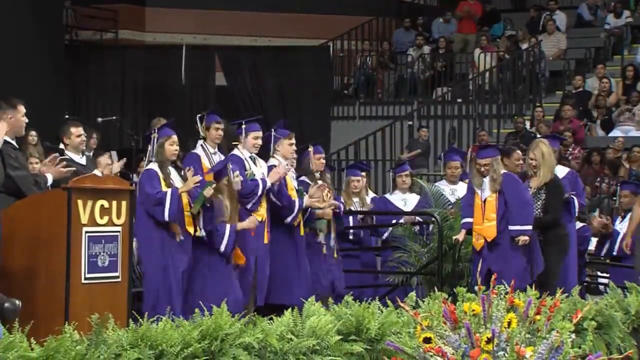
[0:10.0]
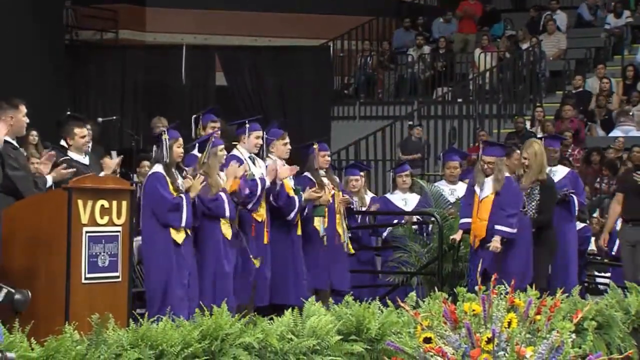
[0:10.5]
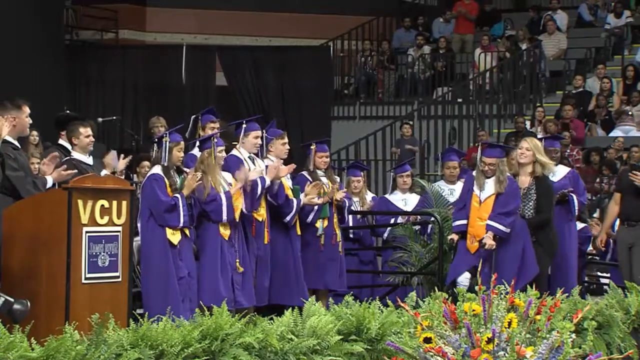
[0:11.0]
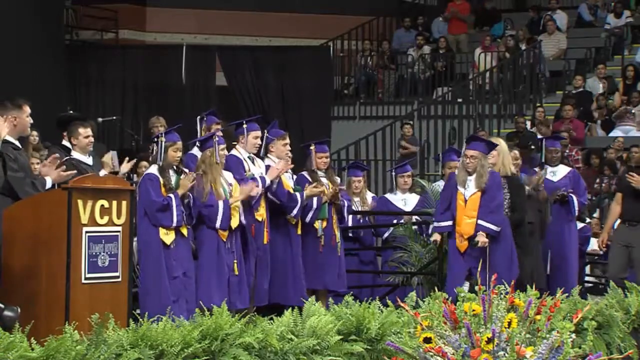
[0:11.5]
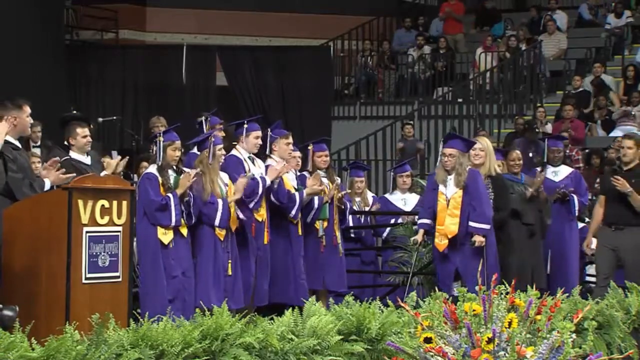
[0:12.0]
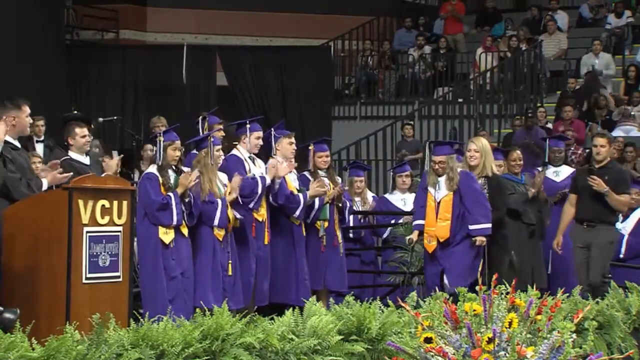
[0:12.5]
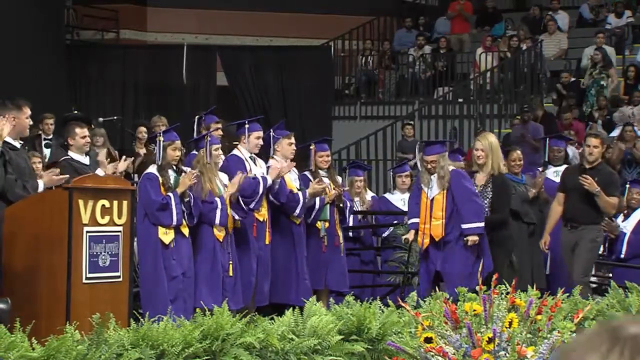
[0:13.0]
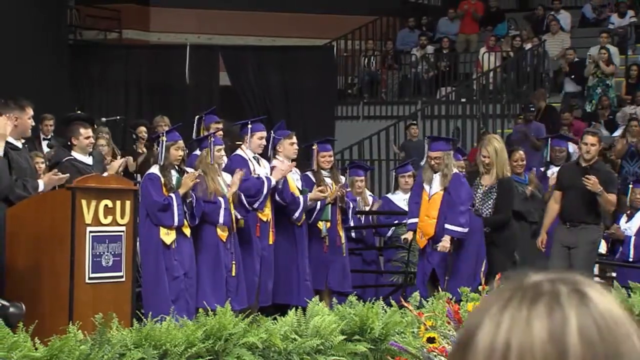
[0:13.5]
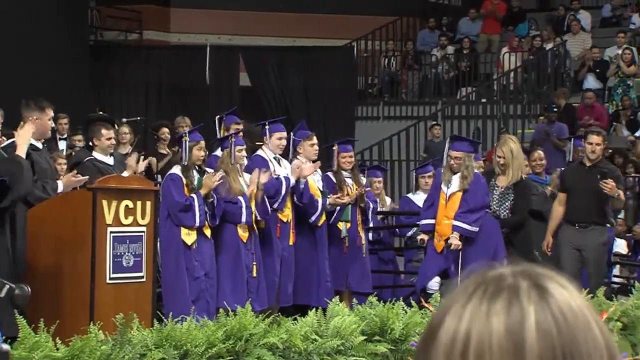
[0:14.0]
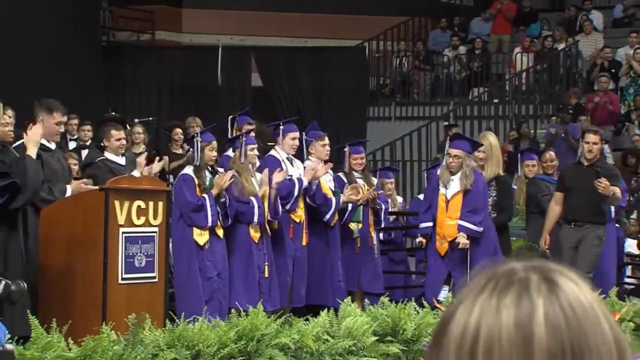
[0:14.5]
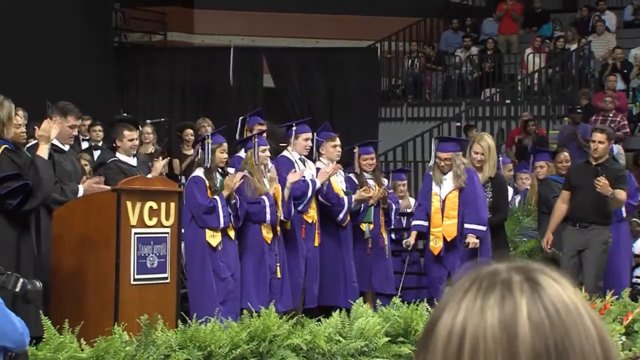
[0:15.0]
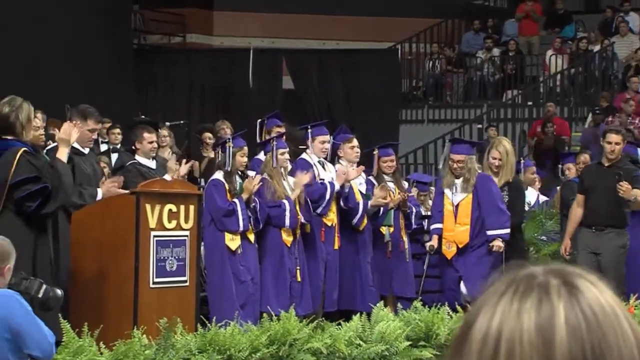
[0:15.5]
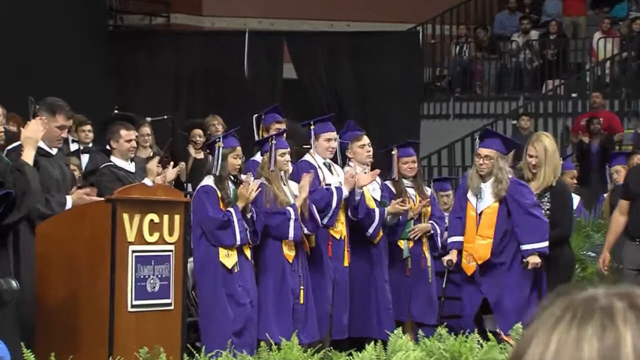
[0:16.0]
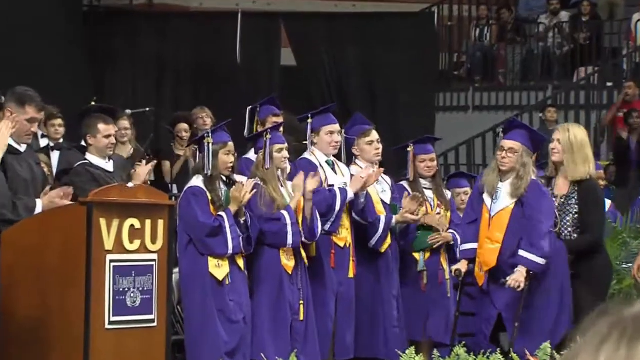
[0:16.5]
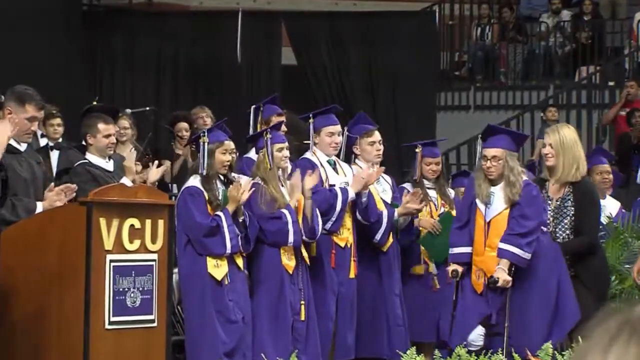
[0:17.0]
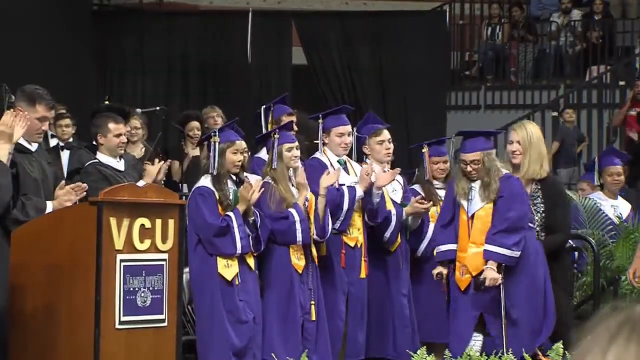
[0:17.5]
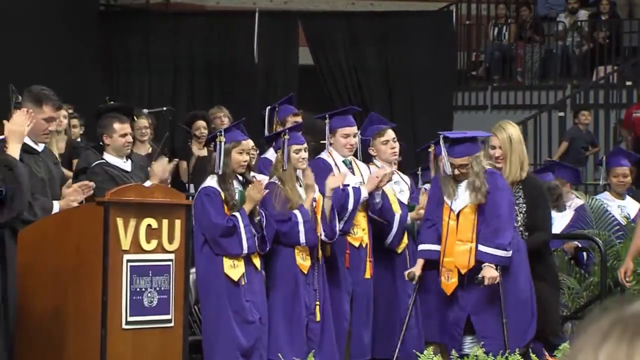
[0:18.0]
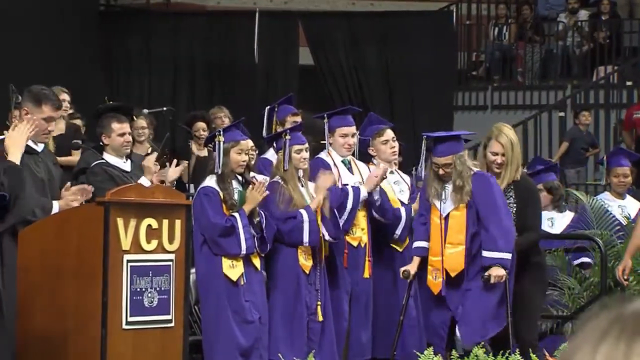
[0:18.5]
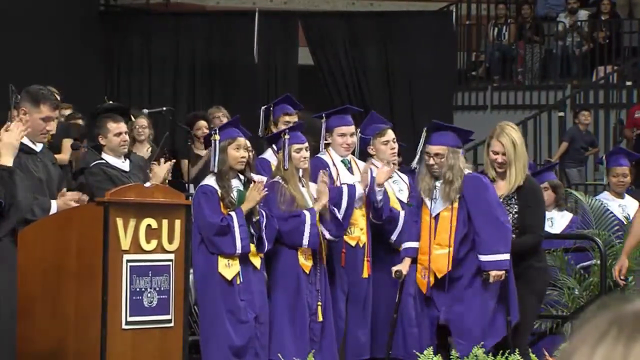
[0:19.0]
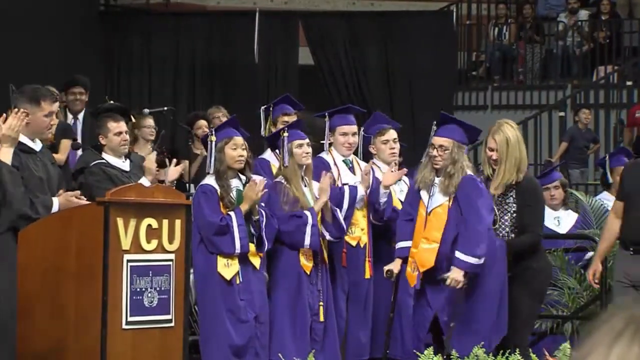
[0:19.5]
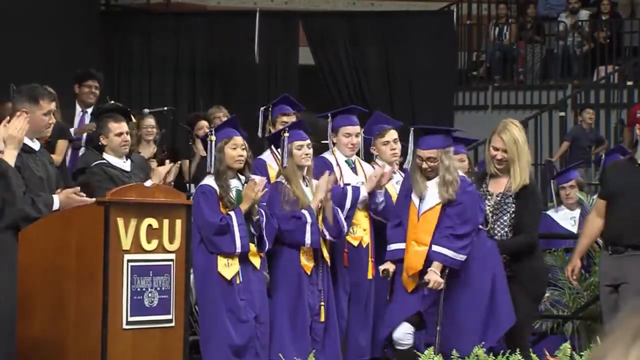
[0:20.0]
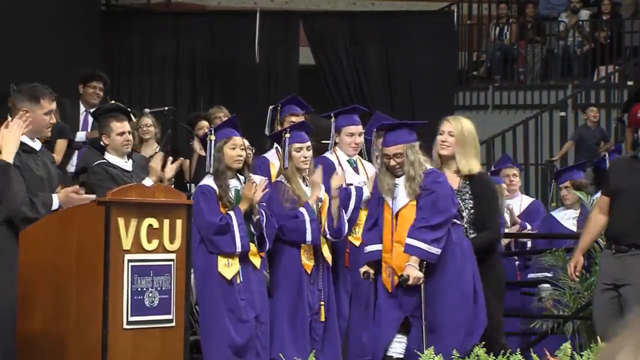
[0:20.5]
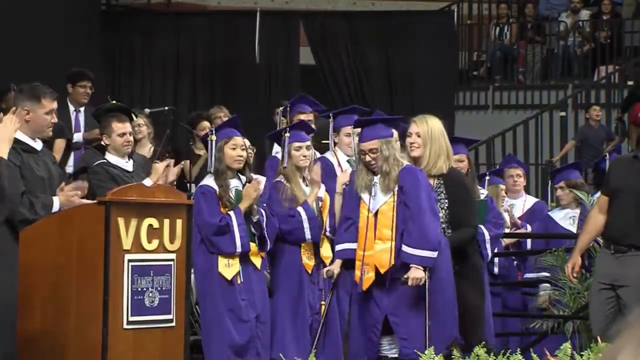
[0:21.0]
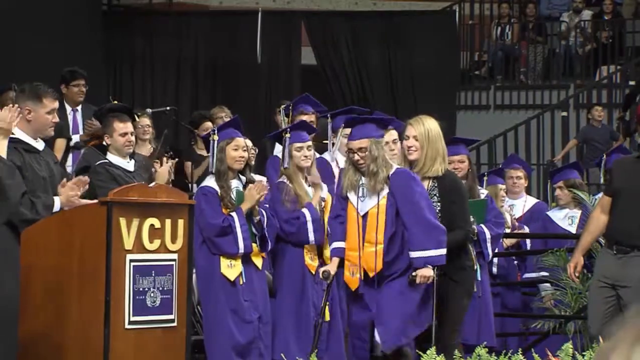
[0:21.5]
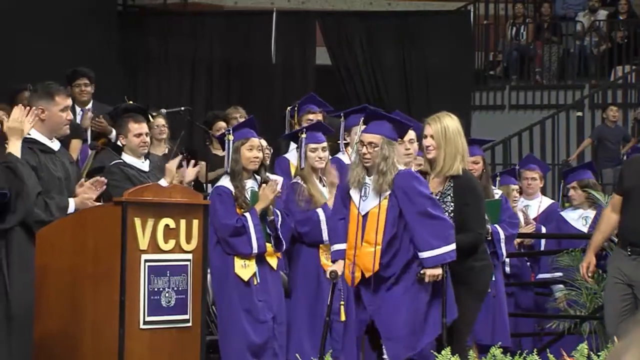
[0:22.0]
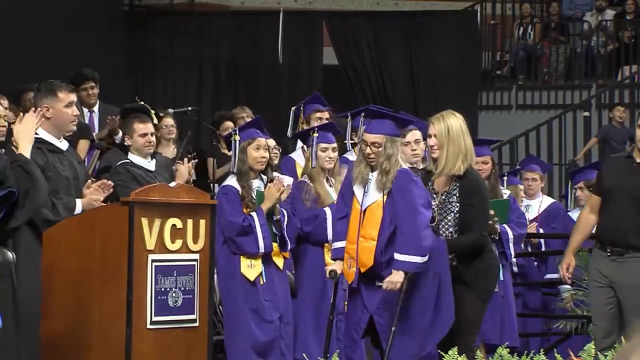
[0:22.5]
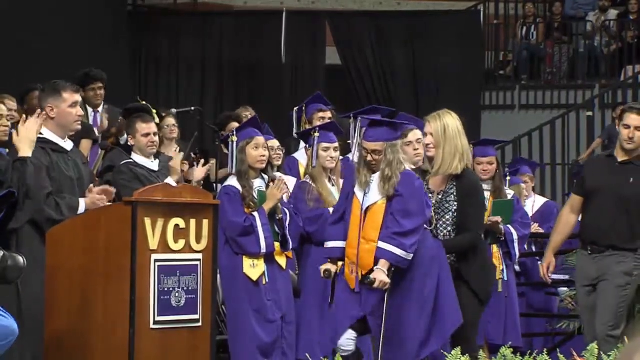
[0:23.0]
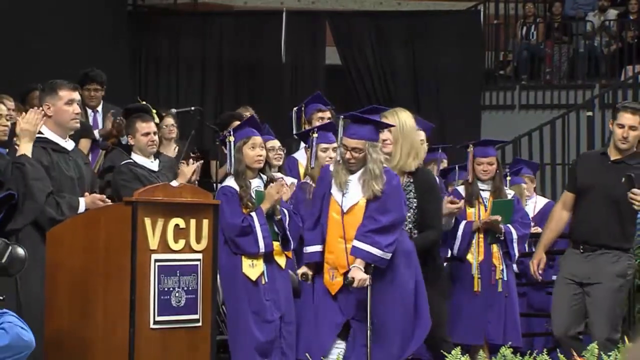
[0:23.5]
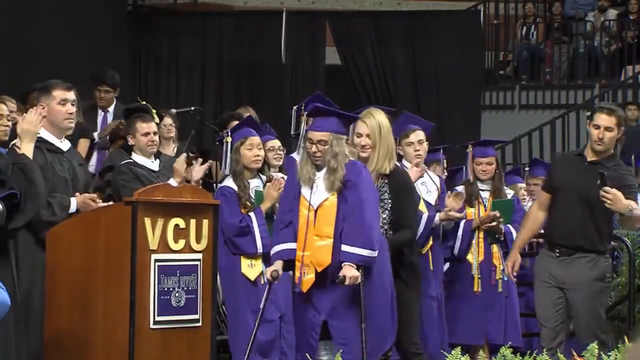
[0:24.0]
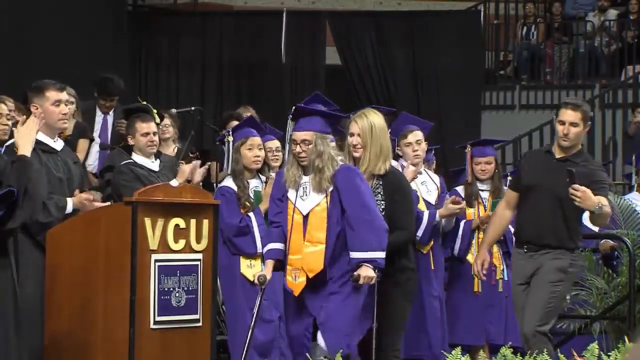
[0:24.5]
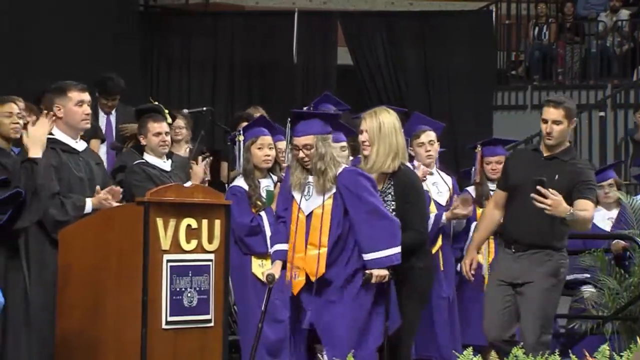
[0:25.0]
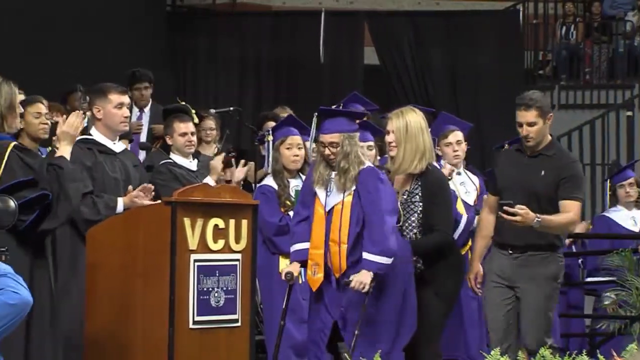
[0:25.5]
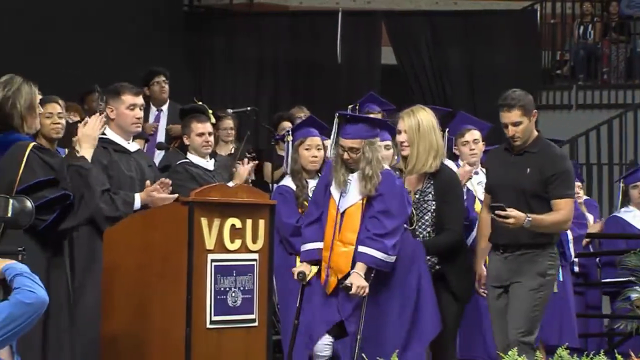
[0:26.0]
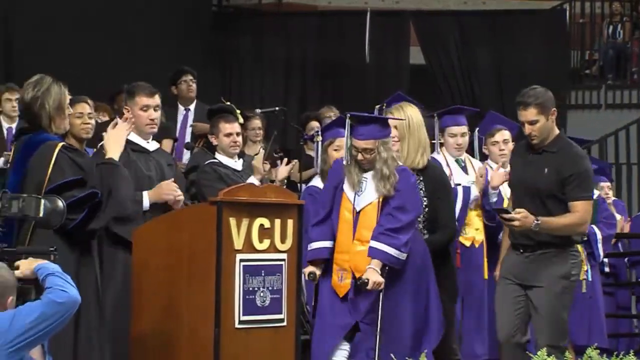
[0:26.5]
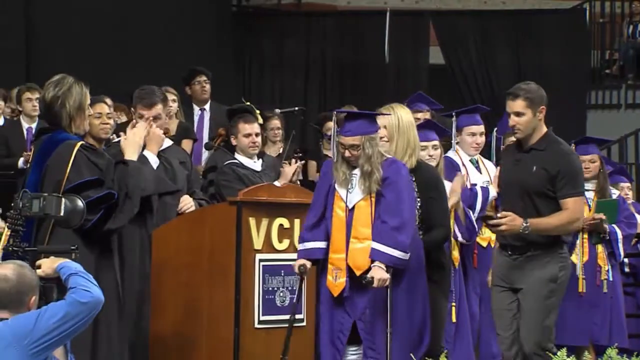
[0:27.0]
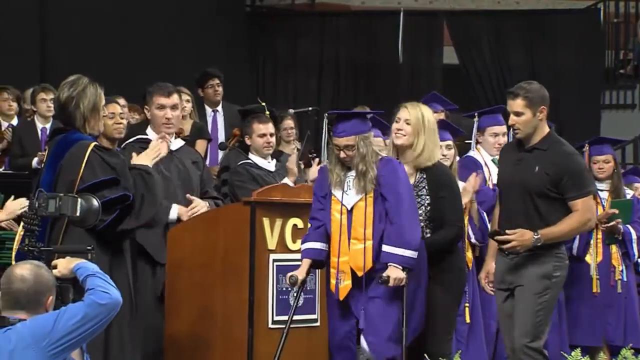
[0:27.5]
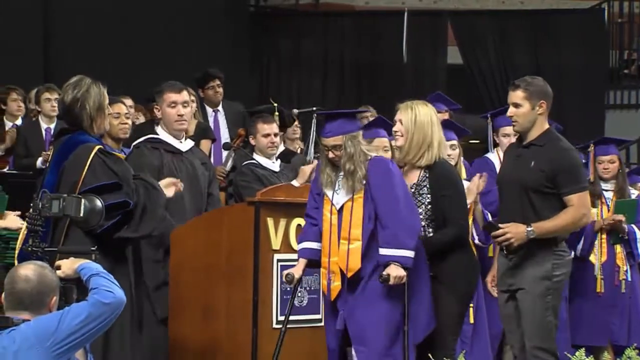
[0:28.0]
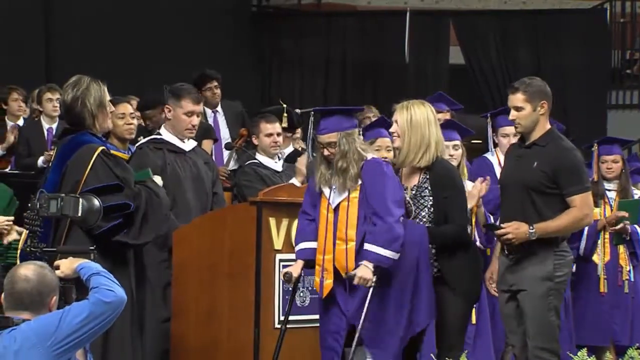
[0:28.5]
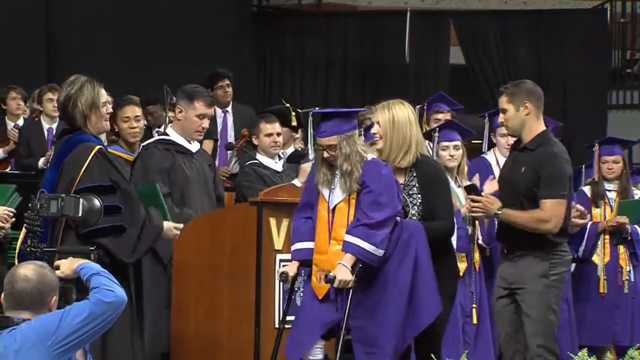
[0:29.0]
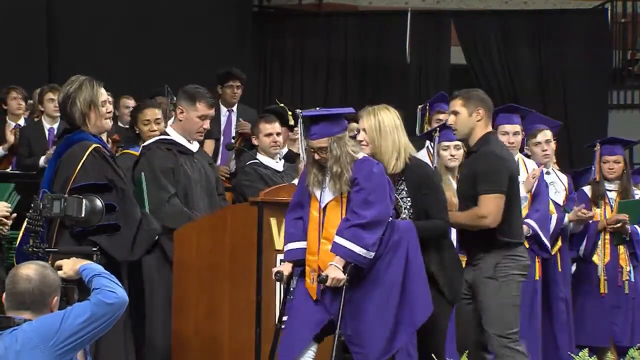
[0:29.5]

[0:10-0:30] The young woman walks up toward her graduation podium with two crutches in her hands, making her way to the front. Her peers, instructors, fellow students and the audience clap and smile, and people record video of her with their cameras. One person looks like they are trying to hold back tears. The young woman appears to have some type of physical handicap or challenge.